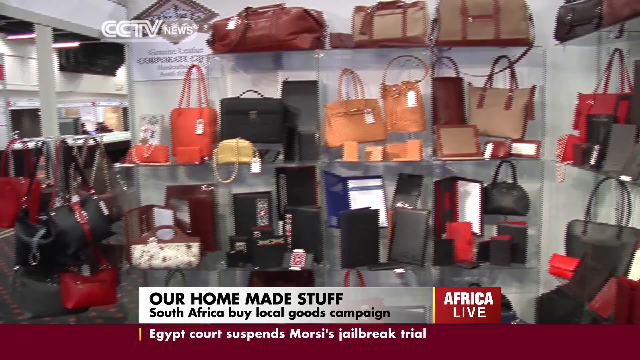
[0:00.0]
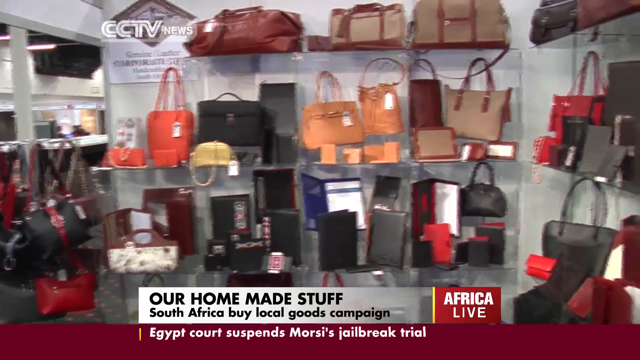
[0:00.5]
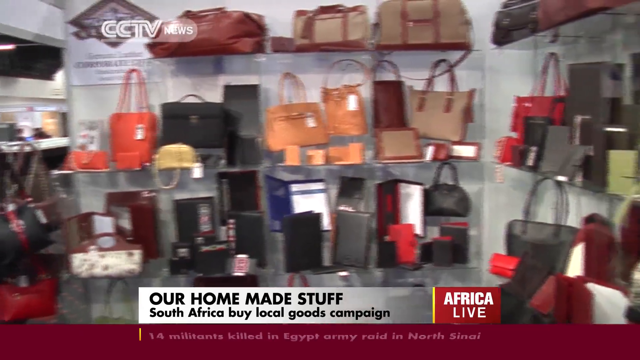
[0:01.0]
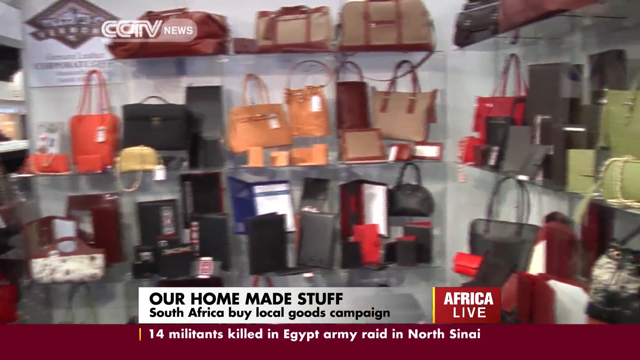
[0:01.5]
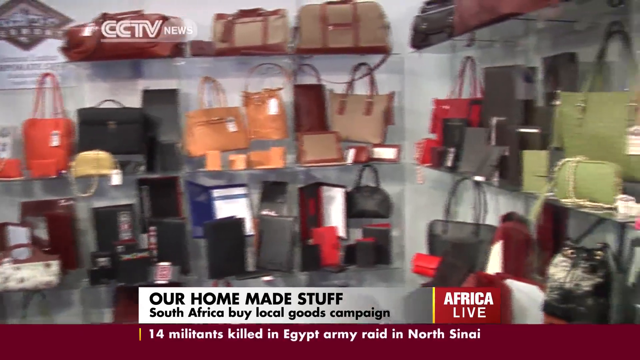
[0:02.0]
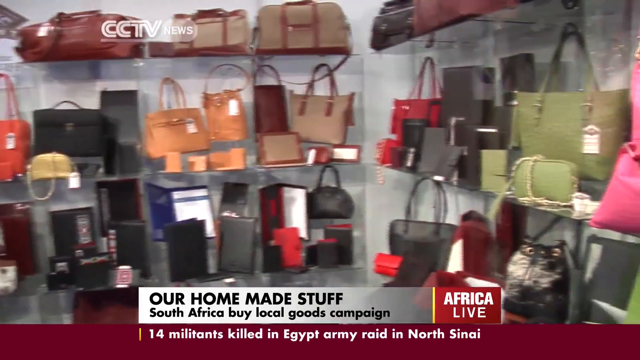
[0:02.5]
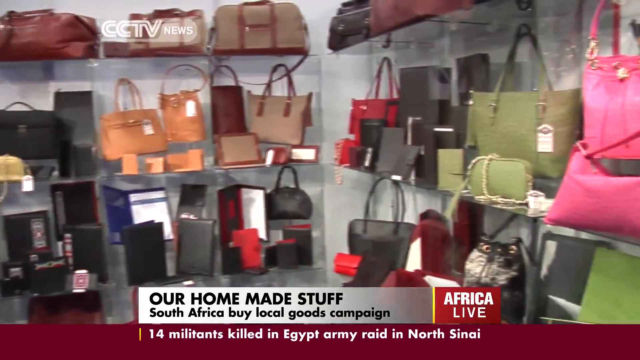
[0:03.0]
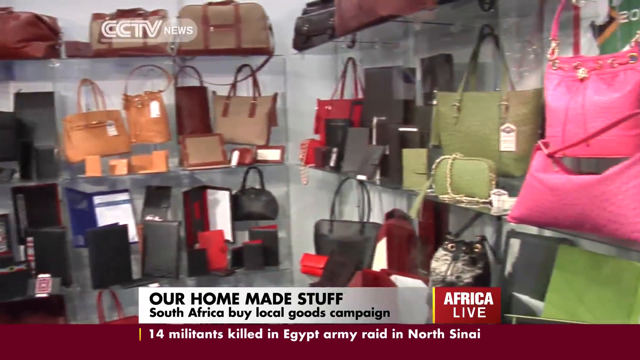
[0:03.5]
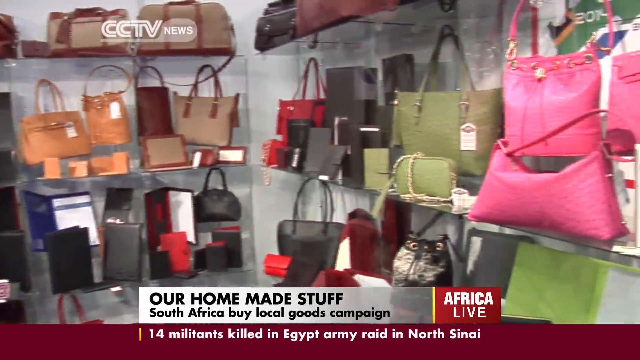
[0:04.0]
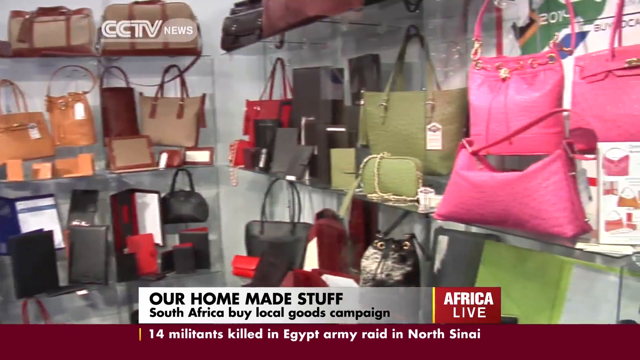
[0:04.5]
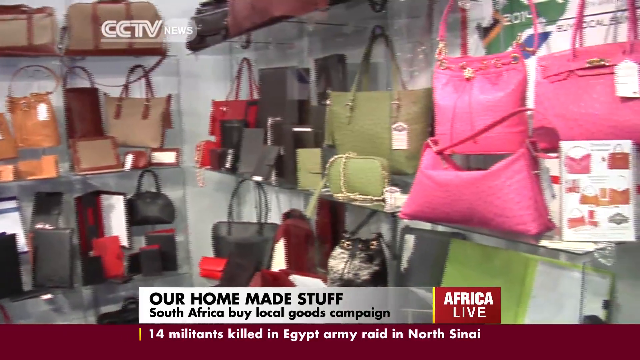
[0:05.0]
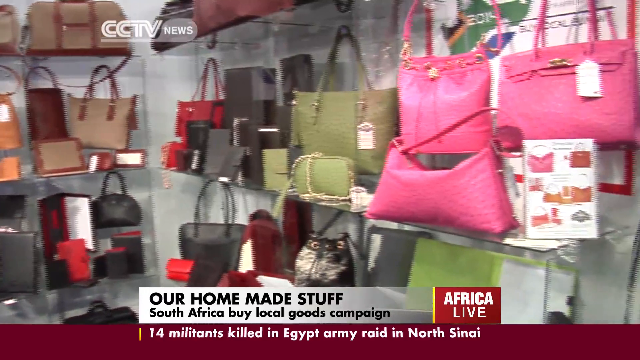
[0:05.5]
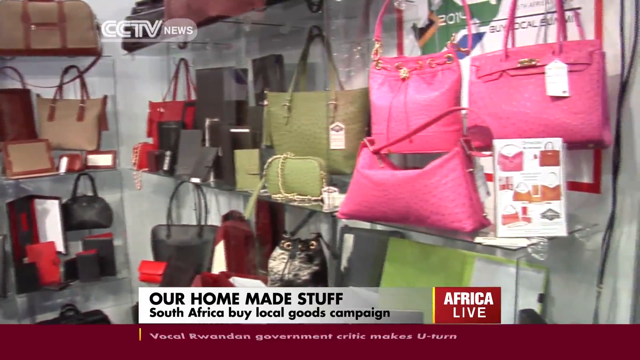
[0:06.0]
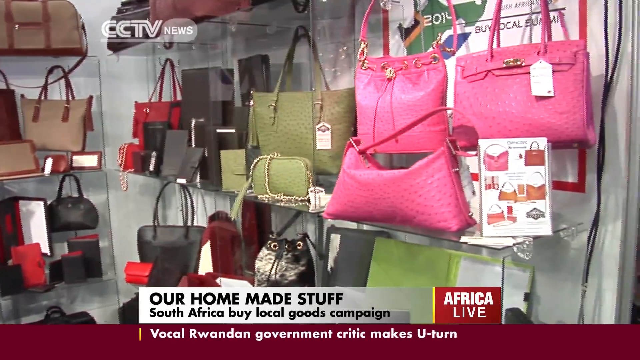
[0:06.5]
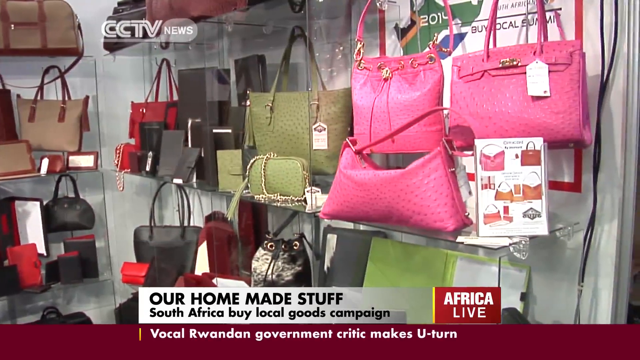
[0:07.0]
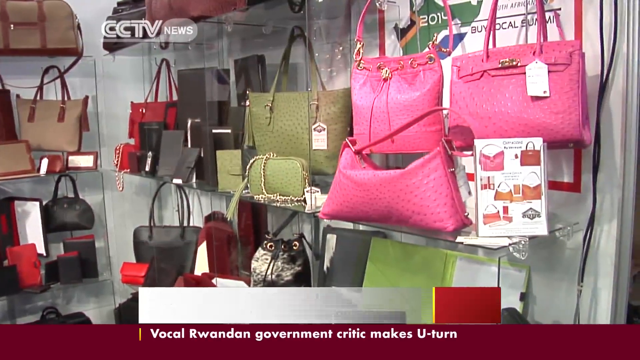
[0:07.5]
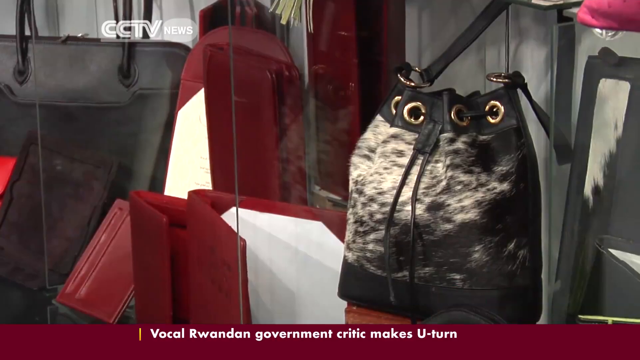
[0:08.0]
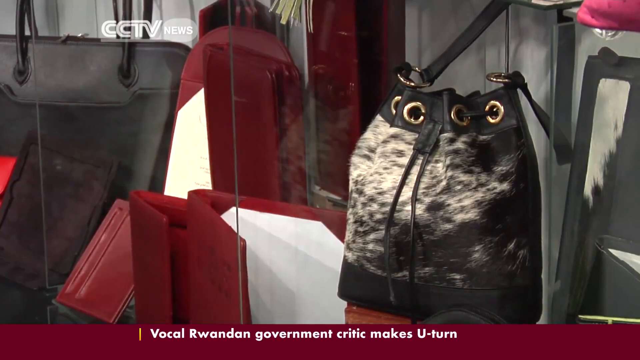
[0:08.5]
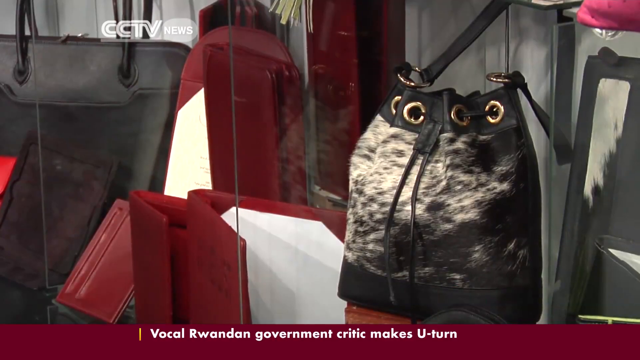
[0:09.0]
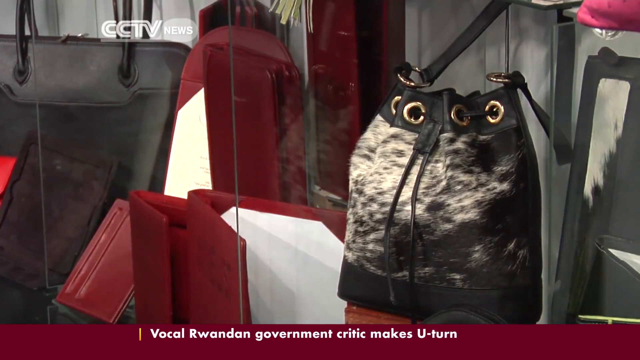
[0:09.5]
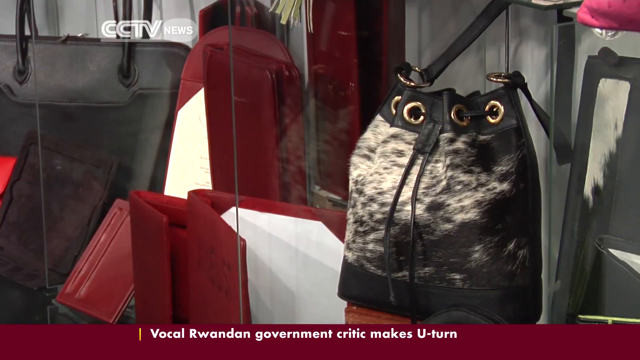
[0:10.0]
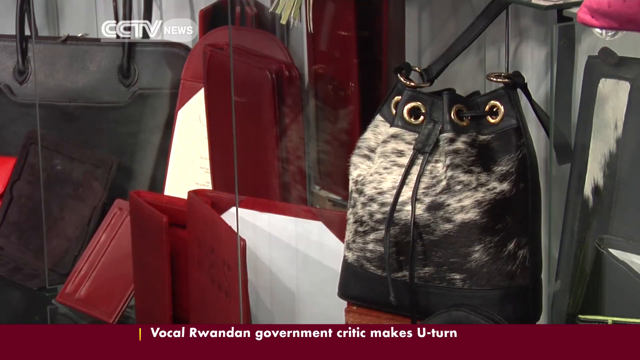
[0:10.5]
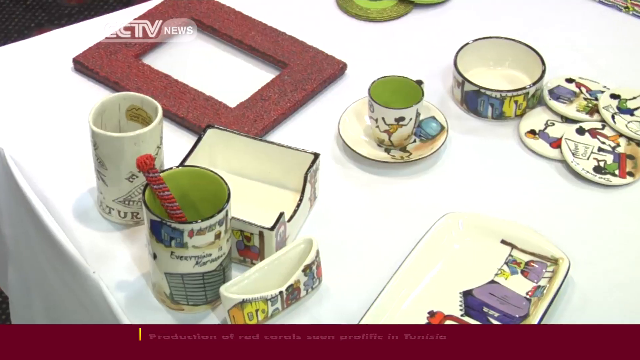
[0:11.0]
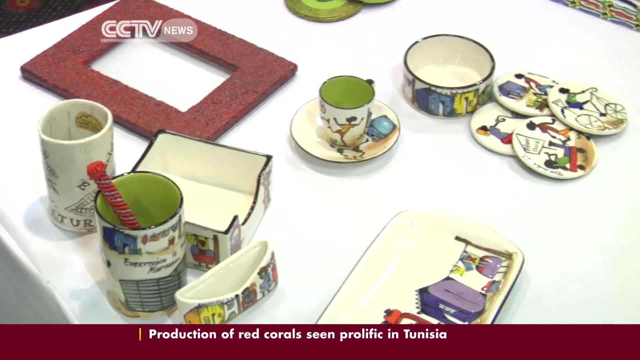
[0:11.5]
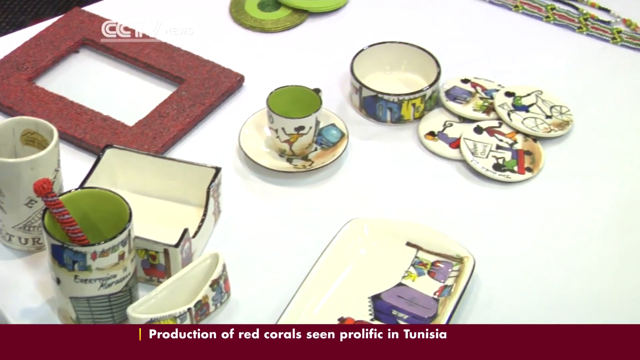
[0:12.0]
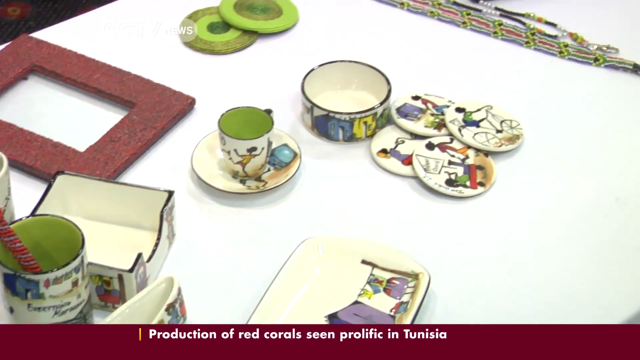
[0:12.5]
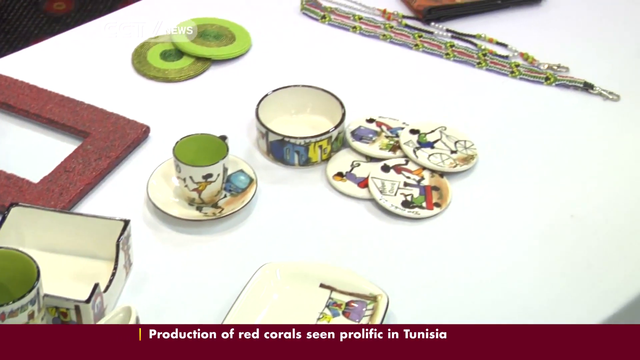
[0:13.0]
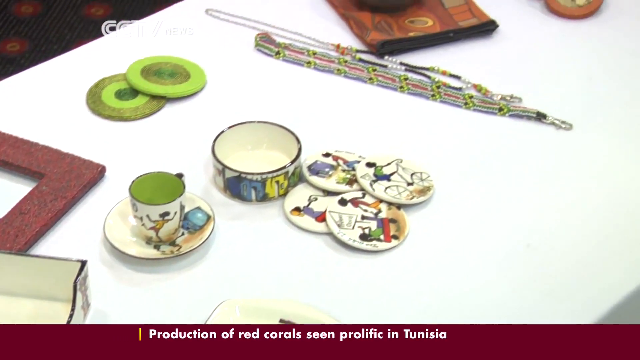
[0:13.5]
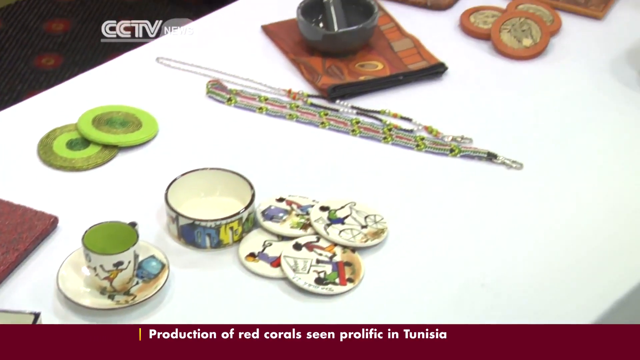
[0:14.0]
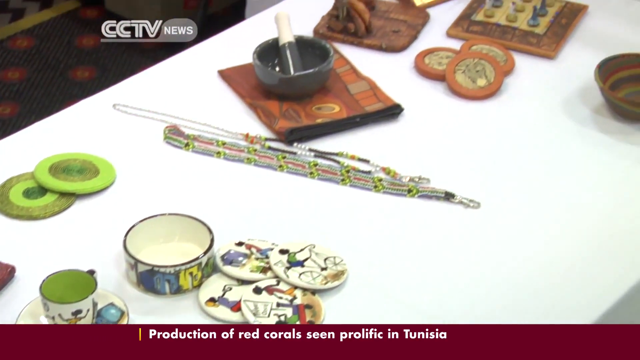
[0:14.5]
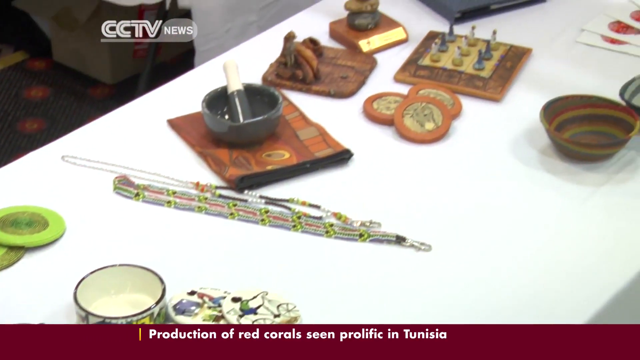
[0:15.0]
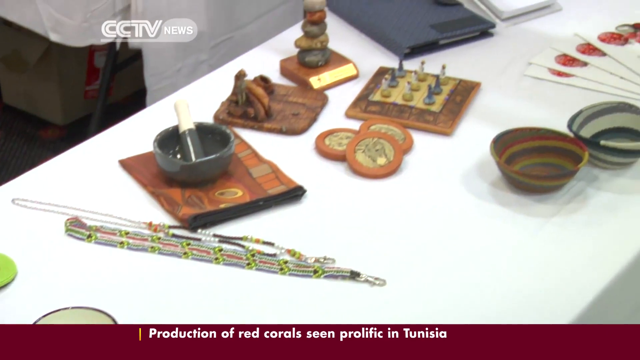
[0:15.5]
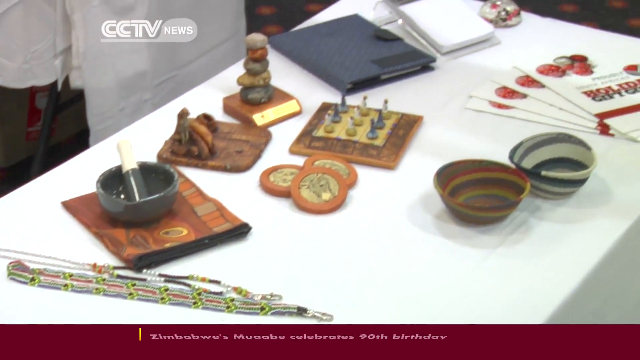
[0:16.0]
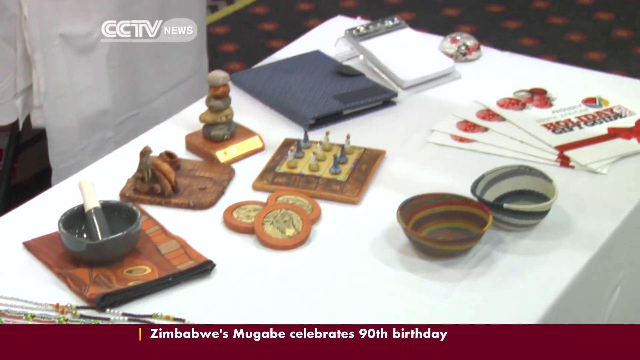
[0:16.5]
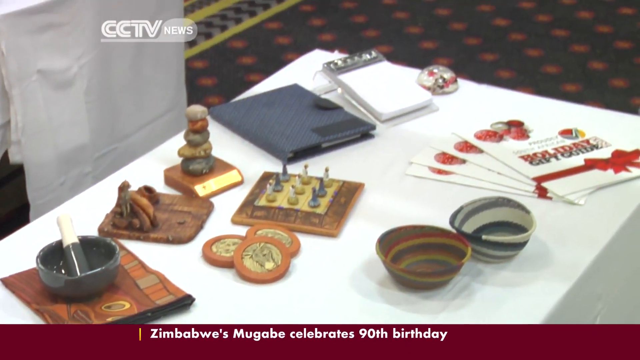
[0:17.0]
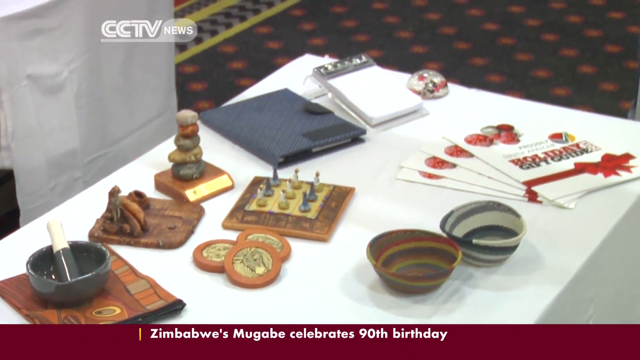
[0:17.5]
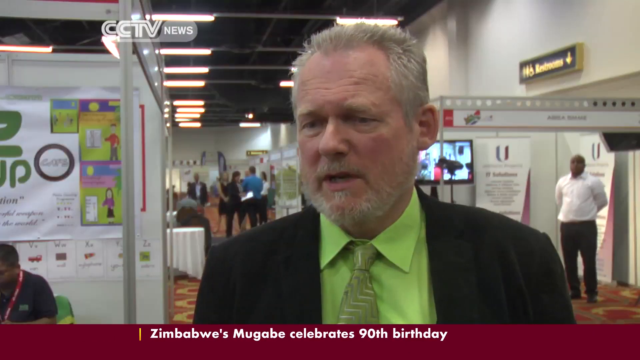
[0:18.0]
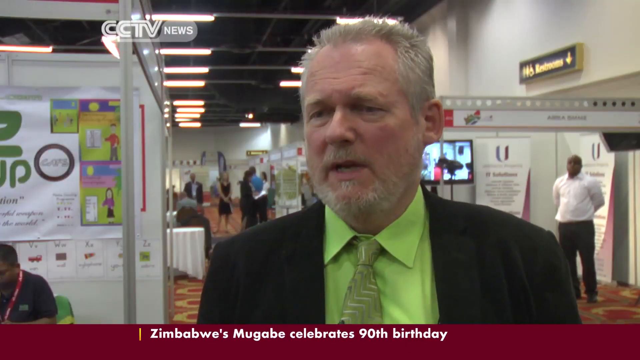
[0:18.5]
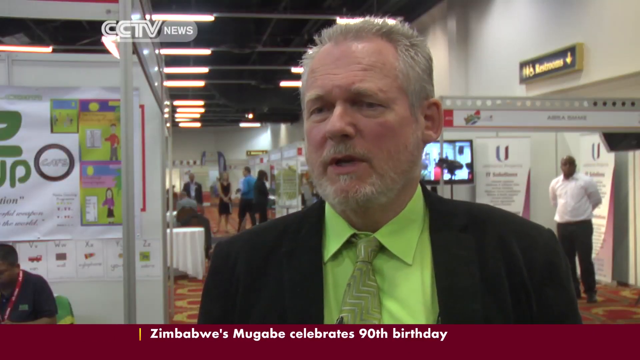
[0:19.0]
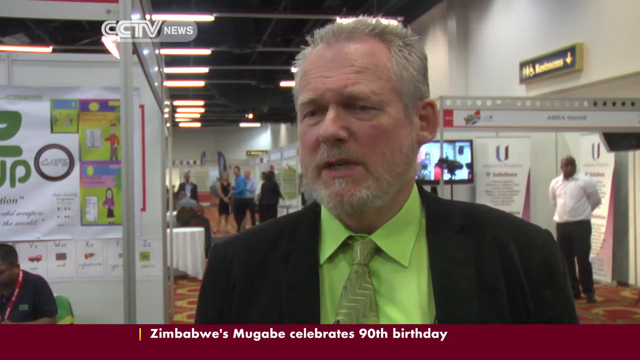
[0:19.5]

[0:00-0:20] A store holds a large number of purses and handbags. On-screen text reads "our home made stuff south africa by local goods campaign" along with "africa live" and "cctv news", and more news runs along the bottom of the screen. The camera kind of zooms in, closing in on a black purse. A table appears with a lot of items on it, little bowls, cups and little artifacts, which seem to be for sale as well. A man in a black suit, green tie and green shirt, maybe in his late 50s or early 60s, comes on screen. The event looks like some type of auction, apparently one big place selling goods for a campaign.